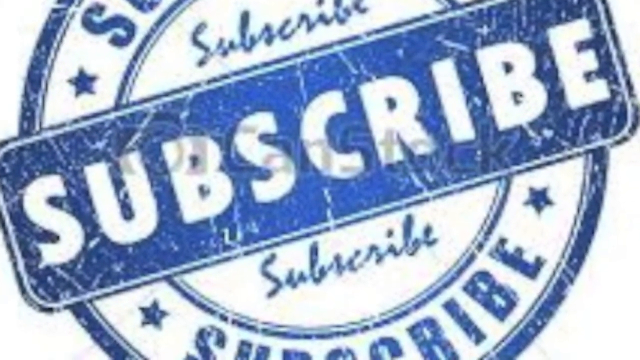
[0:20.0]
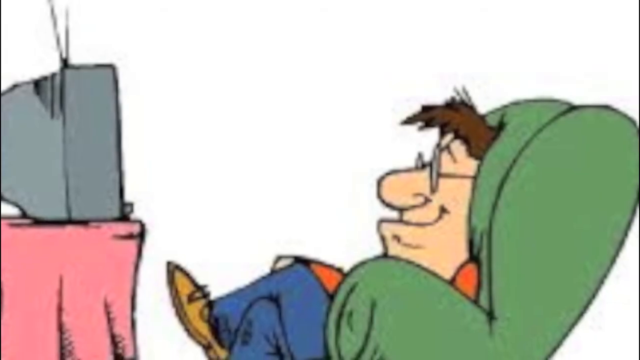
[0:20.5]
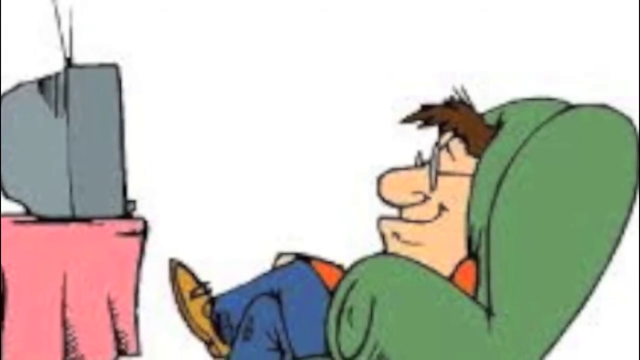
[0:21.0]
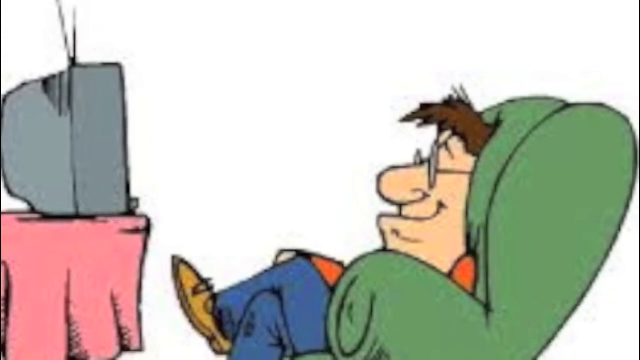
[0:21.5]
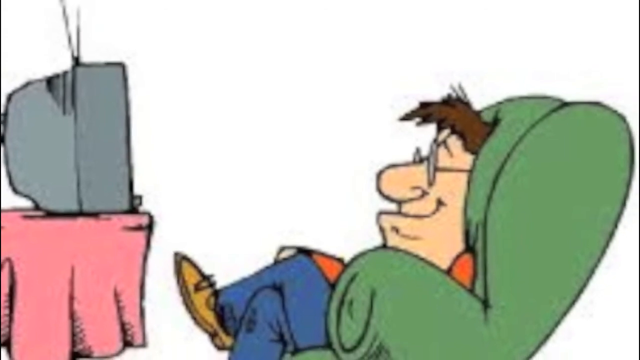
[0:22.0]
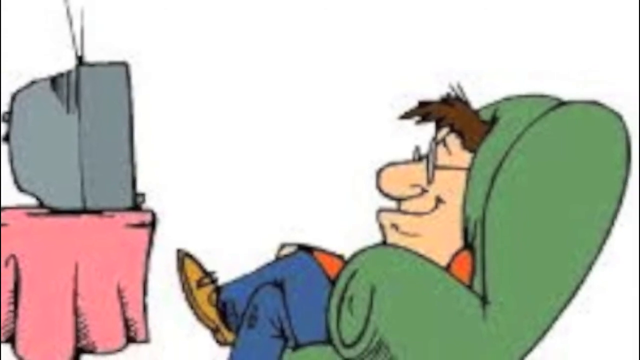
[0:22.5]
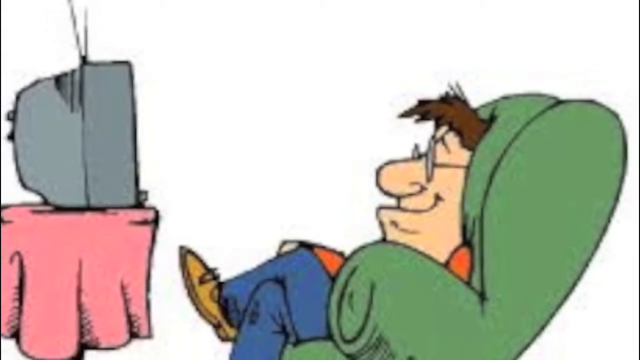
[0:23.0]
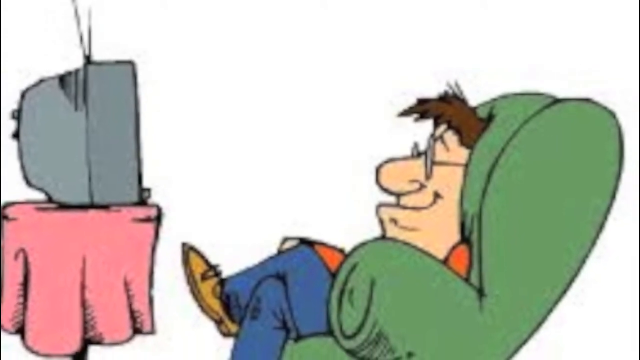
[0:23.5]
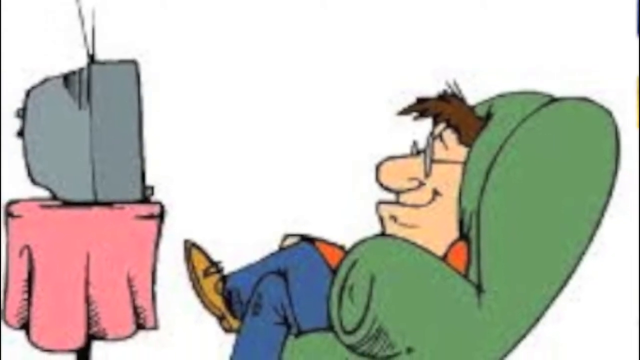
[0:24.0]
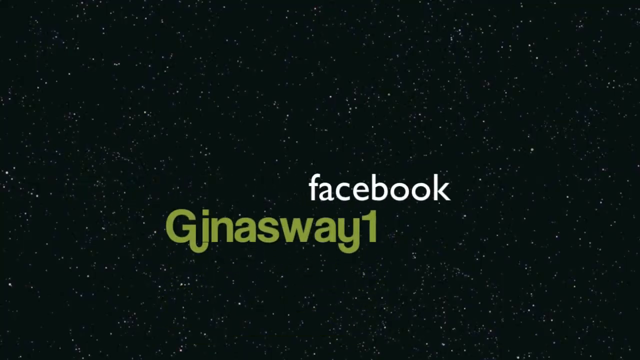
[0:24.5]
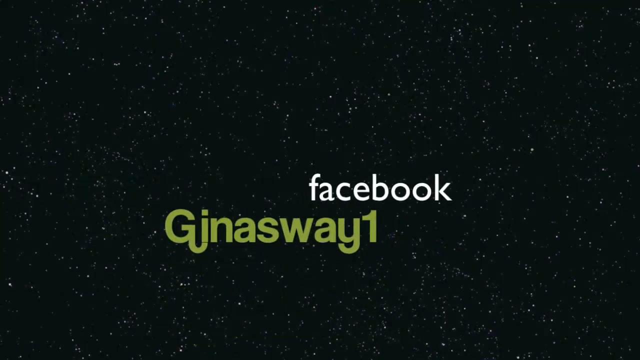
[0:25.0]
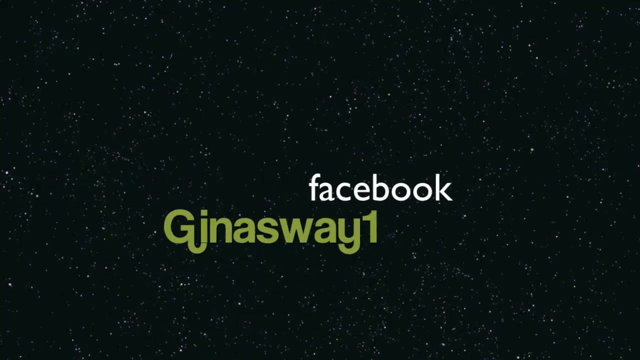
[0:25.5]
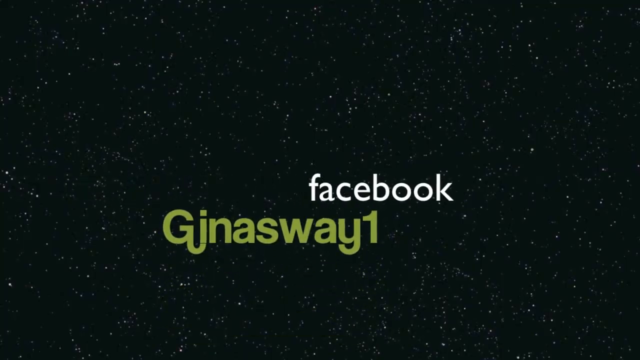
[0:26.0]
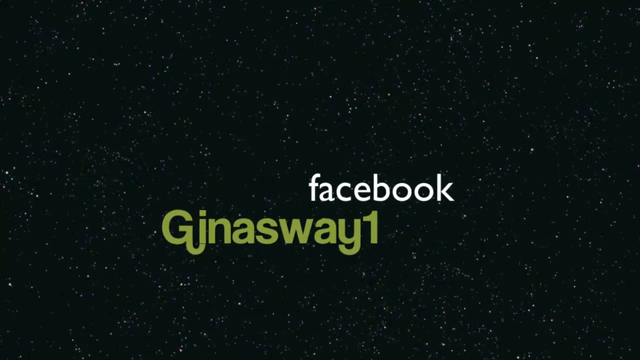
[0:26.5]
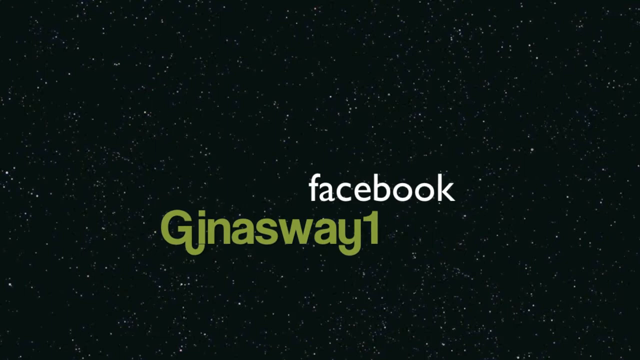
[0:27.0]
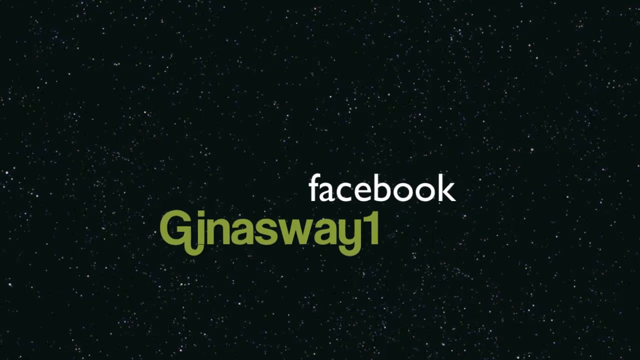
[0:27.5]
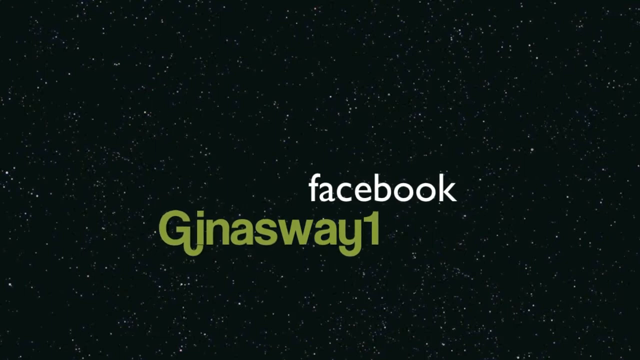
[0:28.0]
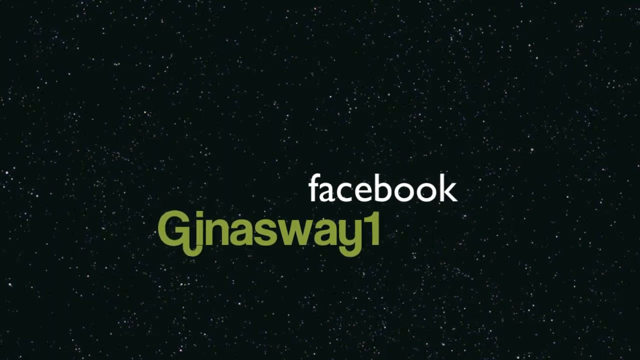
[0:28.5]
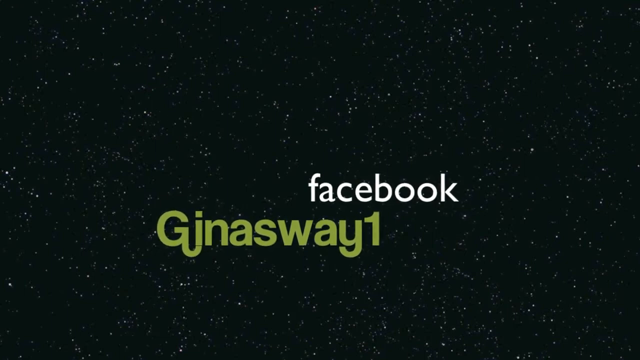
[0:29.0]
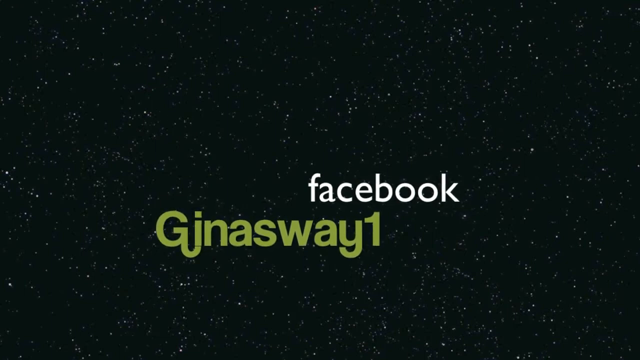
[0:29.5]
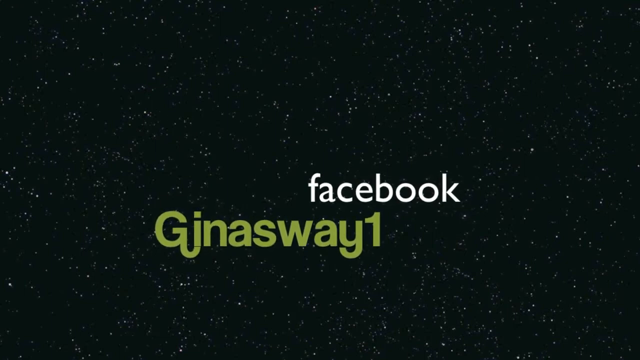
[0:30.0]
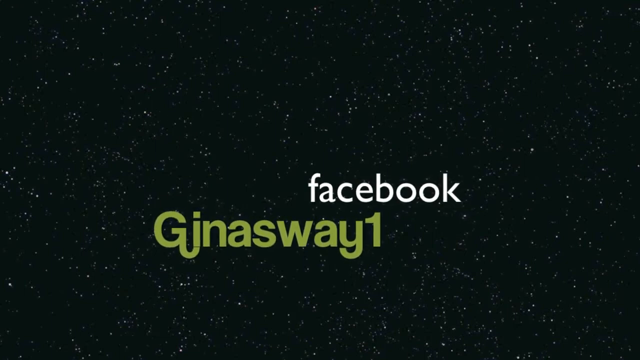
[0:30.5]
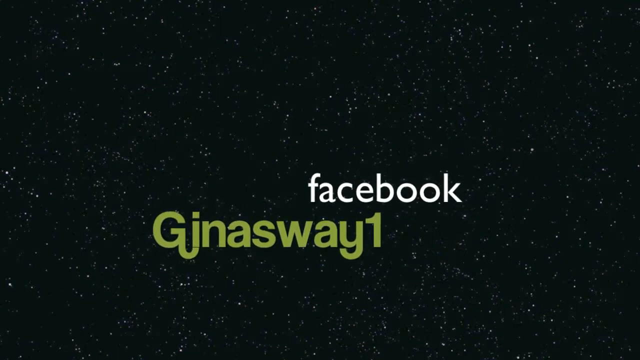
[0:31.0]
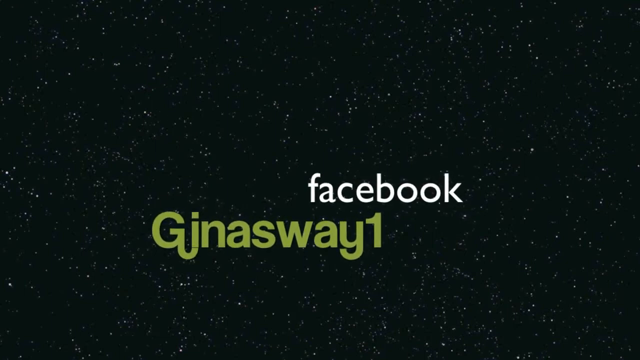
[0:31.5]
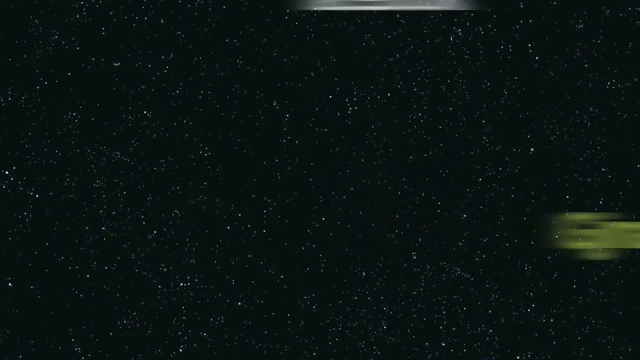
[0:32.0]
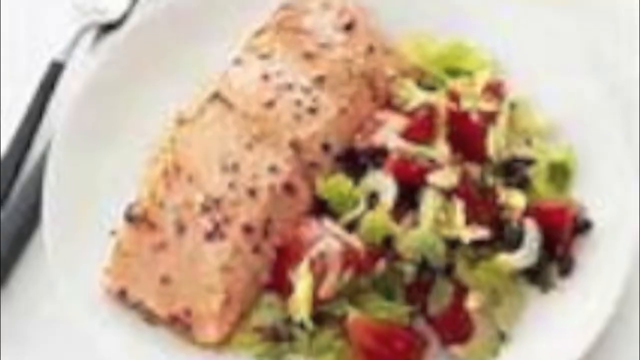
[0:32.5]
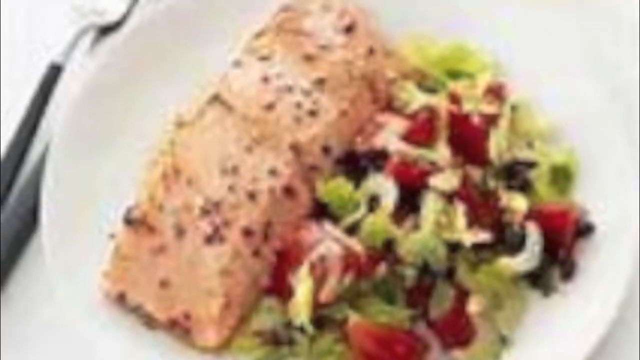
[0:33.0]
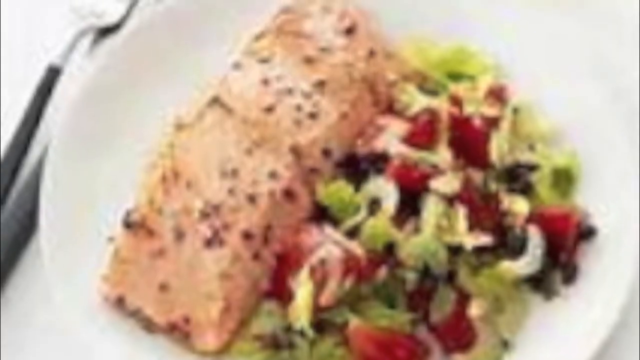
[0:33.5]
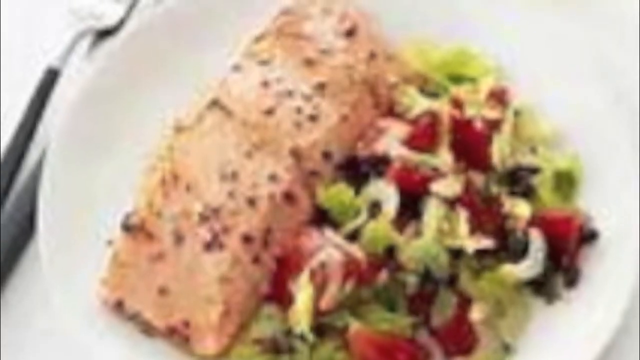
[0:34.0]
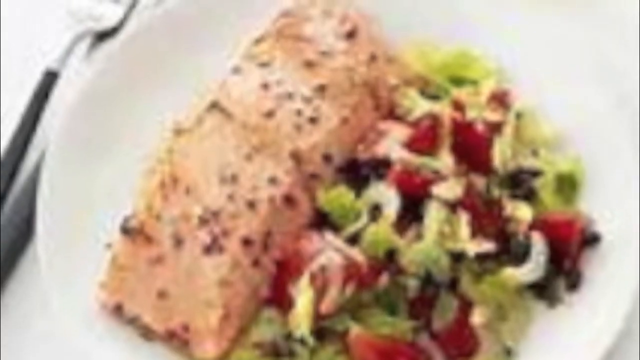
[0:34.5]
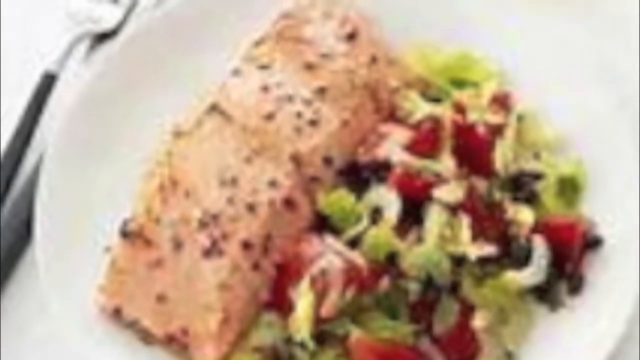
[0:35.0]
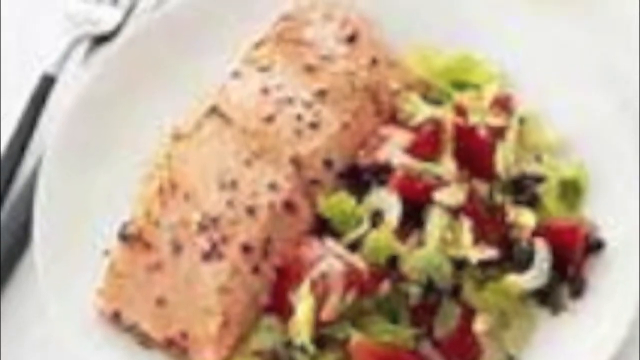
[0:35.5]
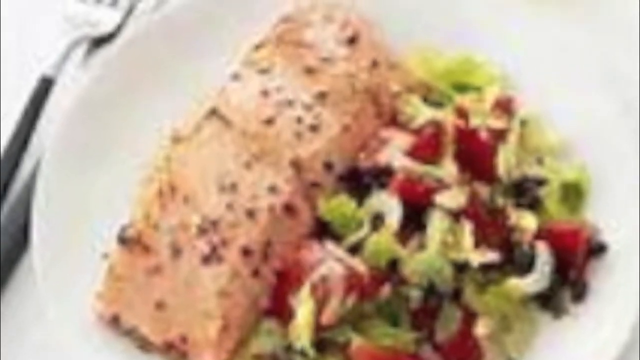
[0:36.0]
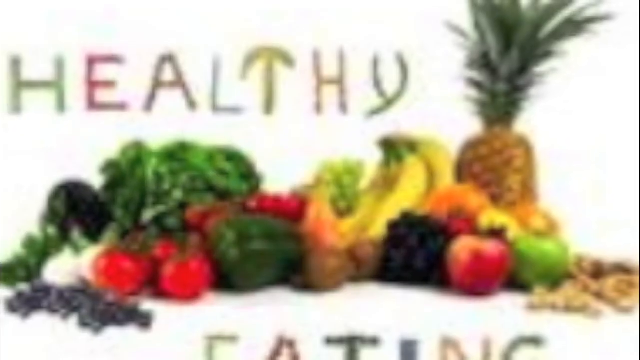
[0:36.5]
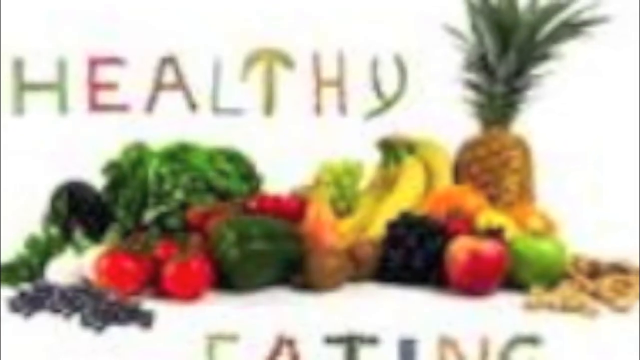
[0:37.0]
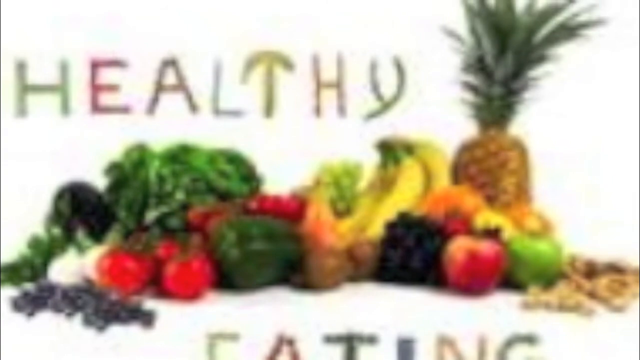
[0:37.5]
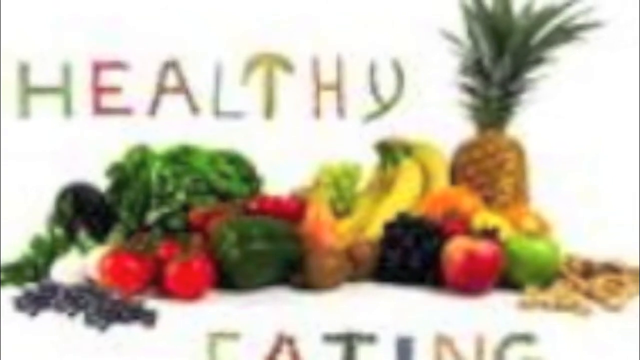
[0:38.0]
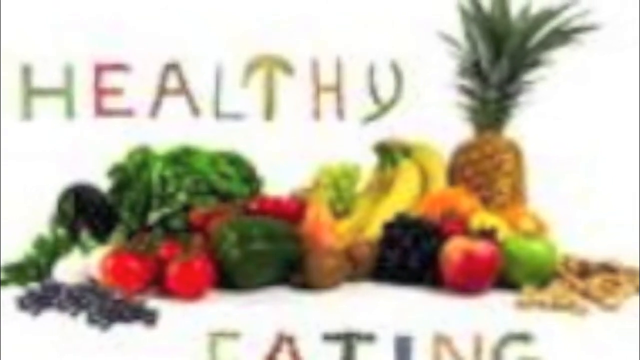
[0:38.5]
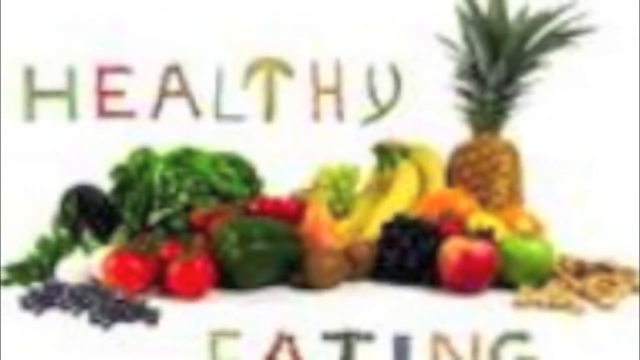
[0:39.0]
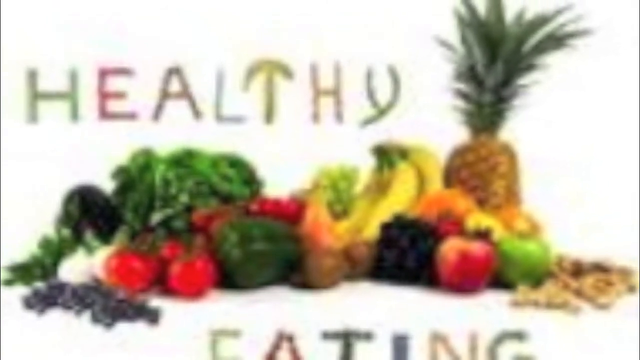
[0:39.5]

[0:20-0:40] After the blue subscribe sign, a cartoon shows a man watching TV. He sits in a green overstuffed chair and has brown hair and glasses. There is a table covered with a pink tablecloth and an old-school TV with rabbit-ear antennas. Next, text reading "Gina's Way One on Facebook" appears on the starry sky background from the opening. The text flies off the screen and a plate of food appears, apparently a piece of salmon next to some salad, in a very low-resolution image. Then a screen shows the word "healthy" above a big row of fruits and vegetables, including tomatoes, peppers, bananas, a pineapple, apples and a bunch of leafy greens.